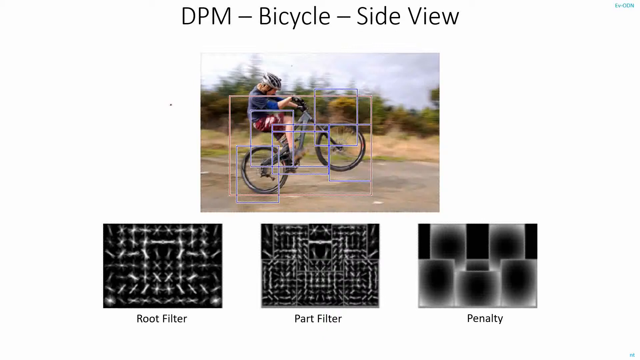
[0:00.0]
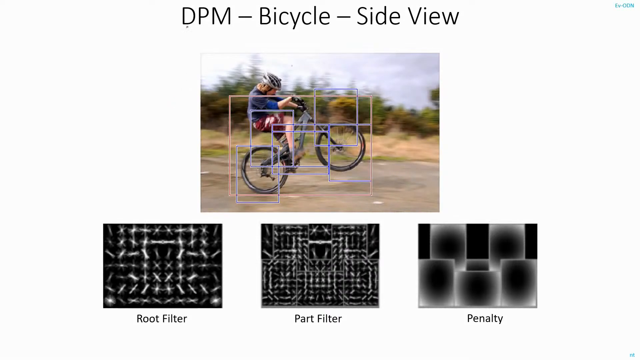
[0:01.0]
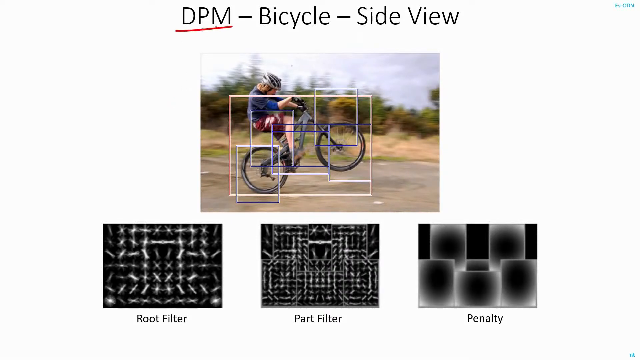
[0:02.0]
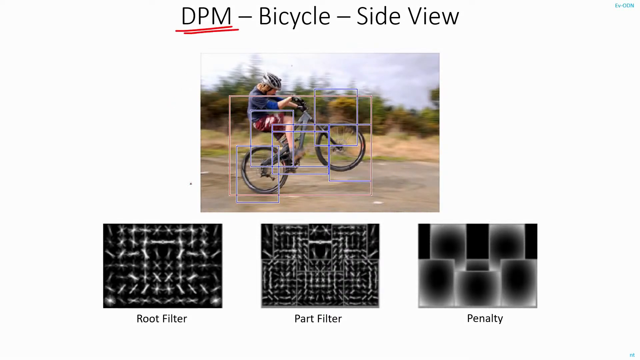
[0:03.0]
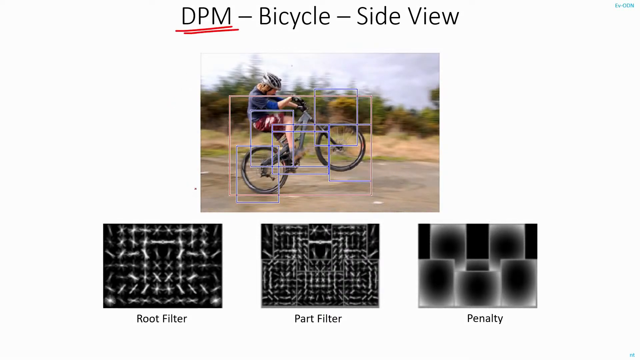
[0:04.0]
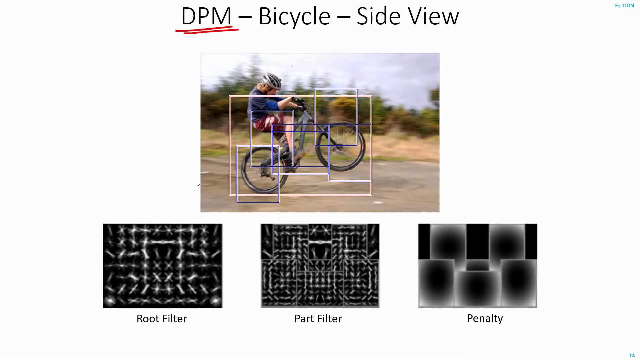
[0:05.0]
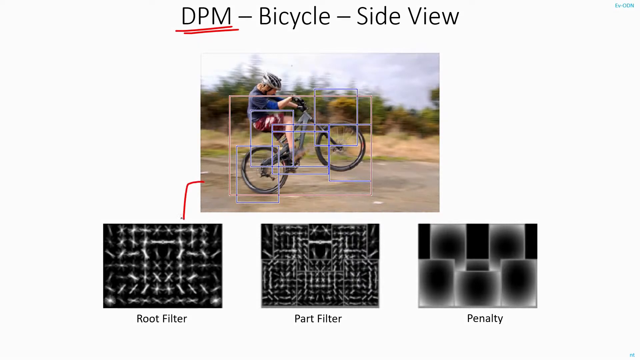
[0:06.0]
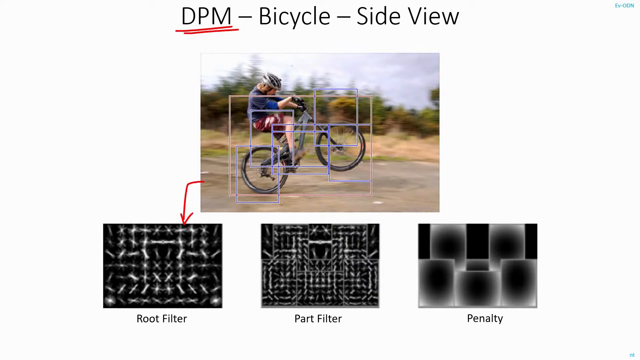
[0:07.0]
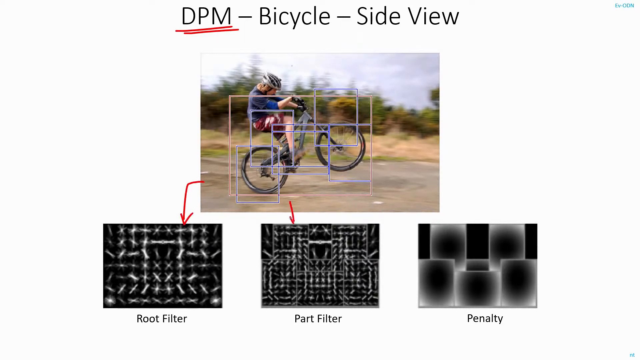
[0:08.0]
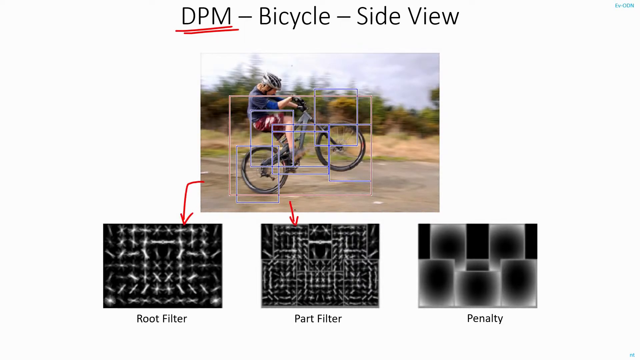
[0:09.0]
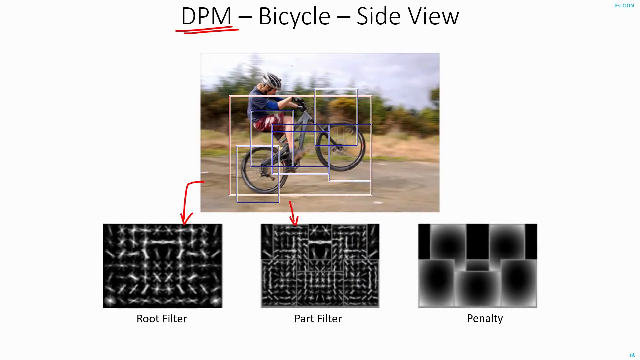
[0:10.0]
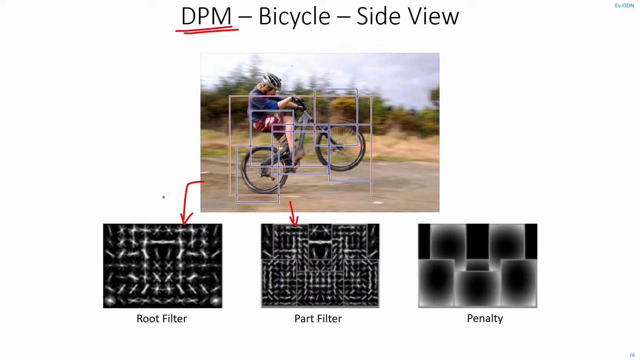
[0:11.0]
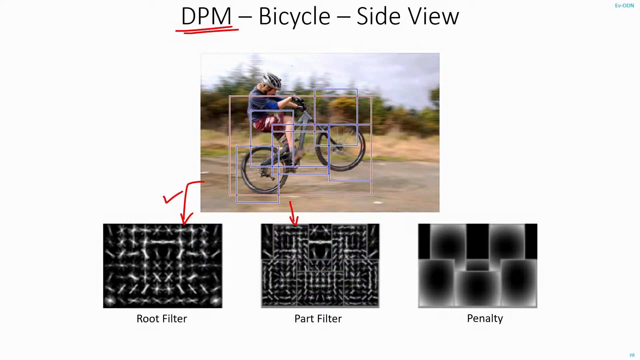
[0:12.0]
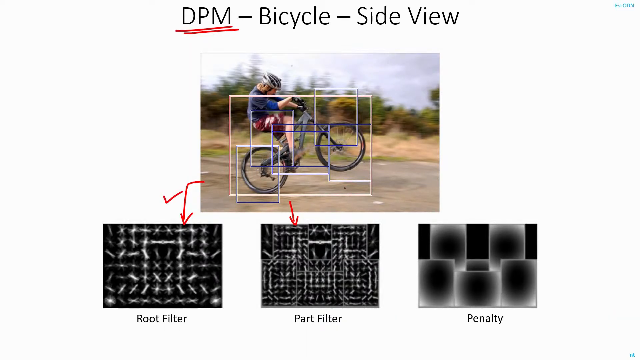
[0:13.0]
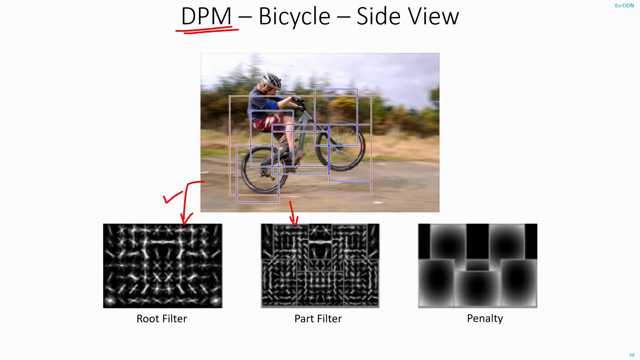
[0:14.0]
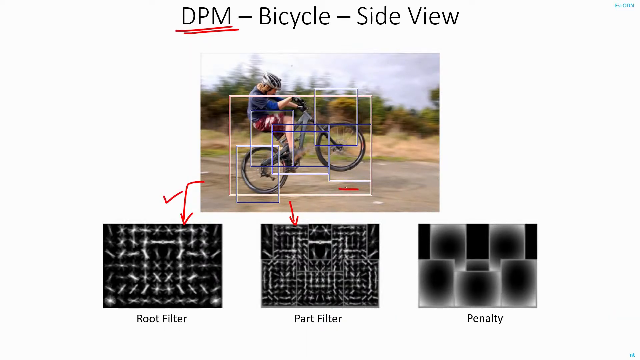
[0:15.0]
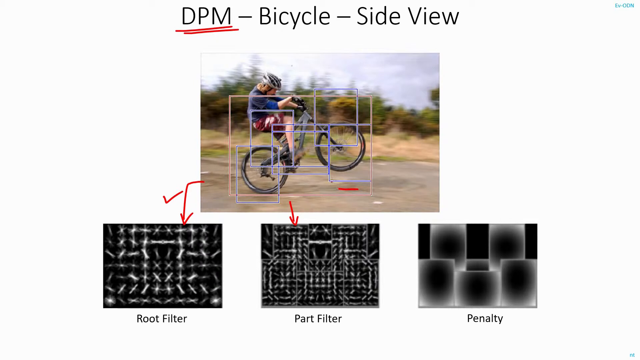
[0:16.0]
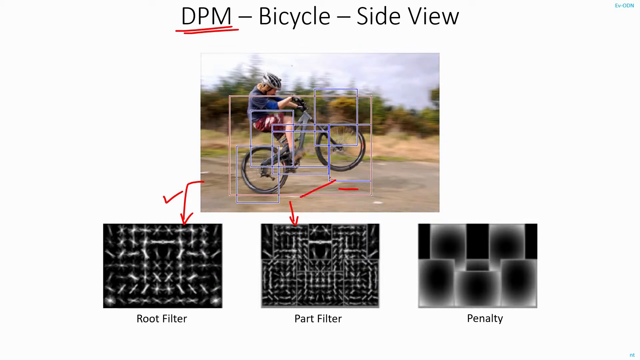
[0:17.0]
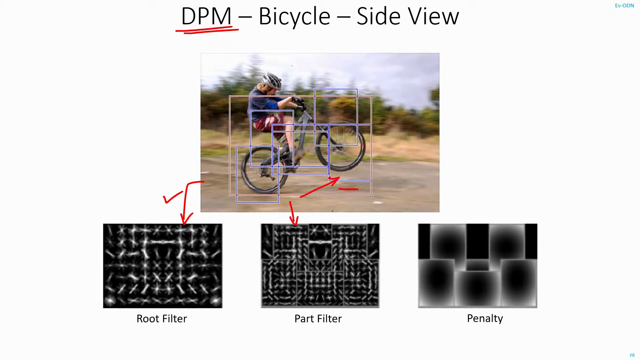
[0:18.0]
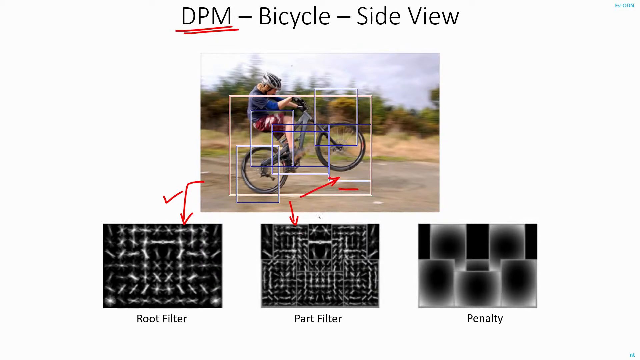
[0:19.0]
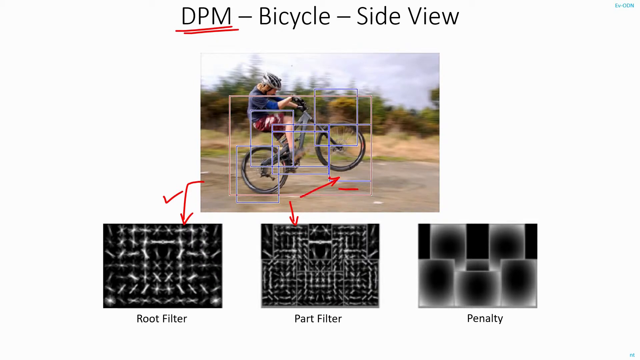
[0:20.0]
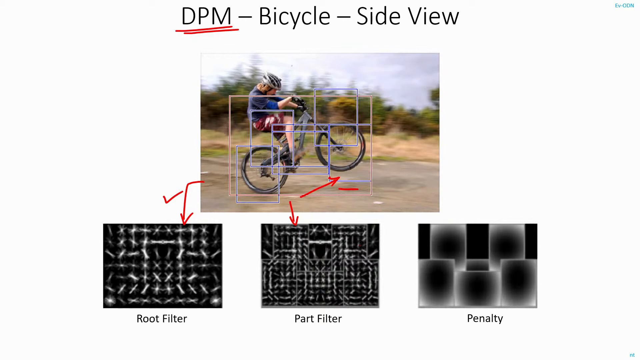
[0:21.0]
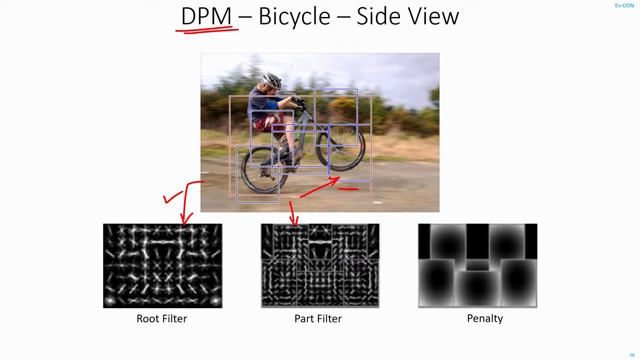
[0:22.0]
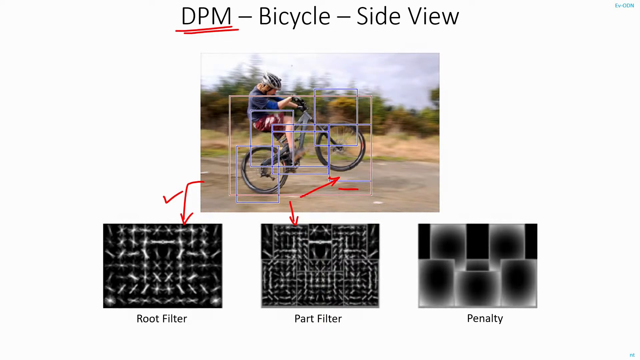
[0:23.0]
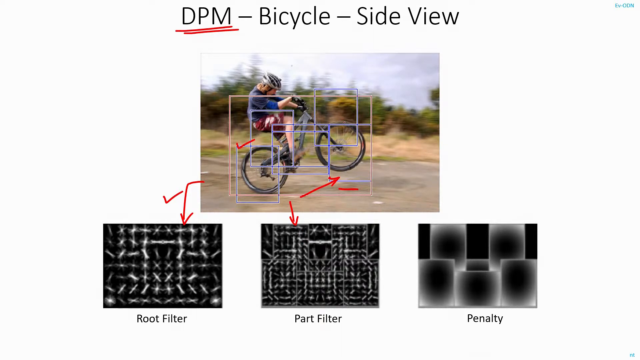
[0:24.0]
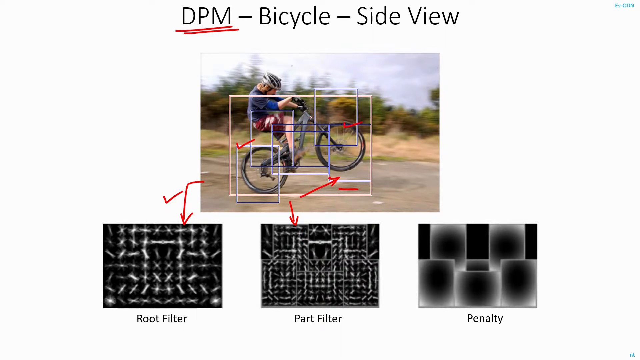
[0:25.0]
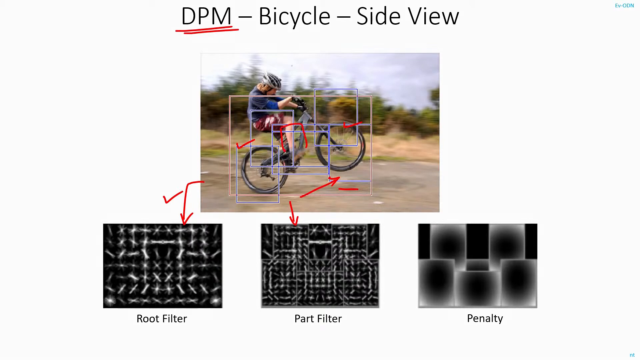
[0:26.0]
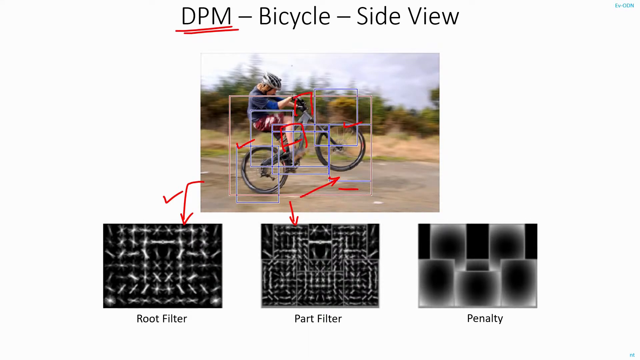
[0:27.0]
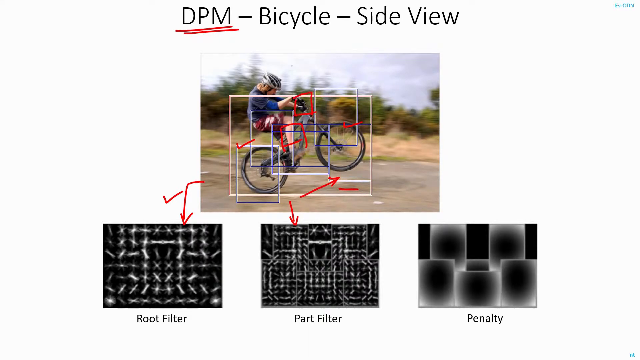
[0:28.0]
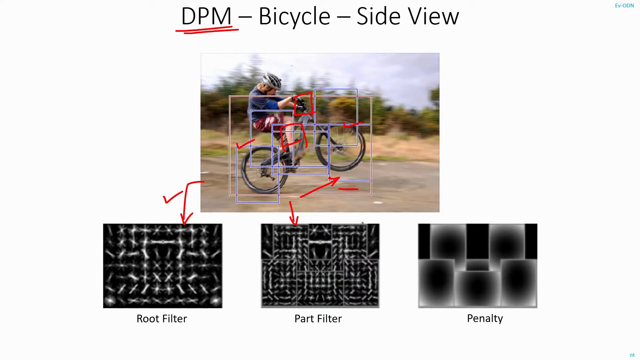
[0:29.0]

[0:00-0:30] The video opens on what appears to be a PowerPoint presentation slide showing a kid on a bike doing a wheelie, with text above it reading "DPM Bicycle Side View". At the bottom are three things with different designs, labeled "root filter", "part filter" and "penalty". Little red lines, which turn out to be little arrows, are drawn from the image of the kid on the bike down to the first two items below it, and a little red check mark is drawn. Someone keeps drawing, though the drawing tool is not visible, and an arrow appears in the image of the kid with the bike, low down, kind of pointing up to the tire that is in the air.